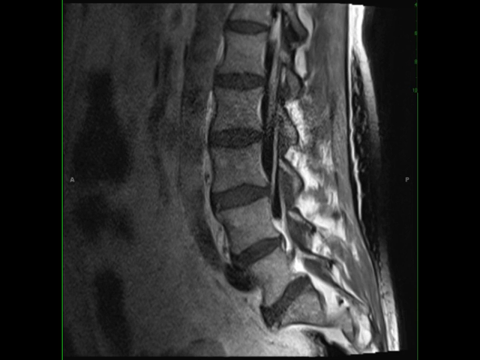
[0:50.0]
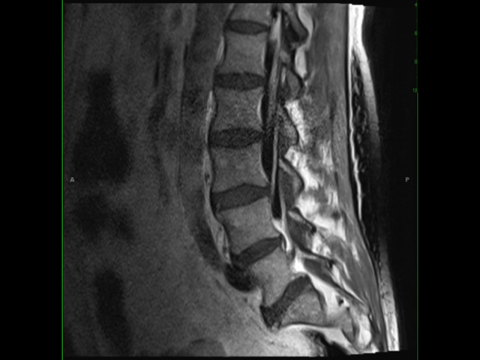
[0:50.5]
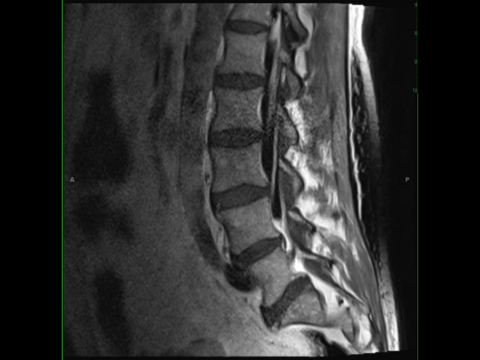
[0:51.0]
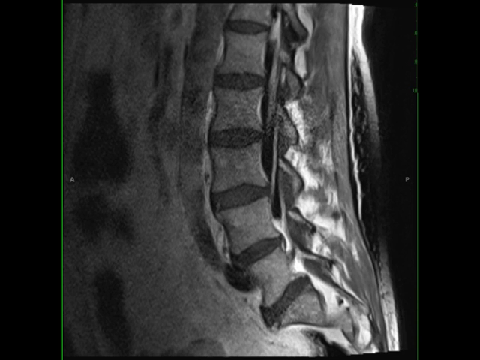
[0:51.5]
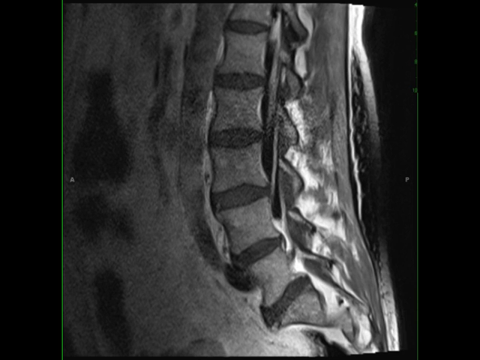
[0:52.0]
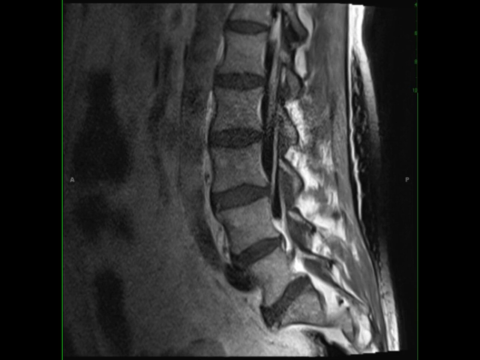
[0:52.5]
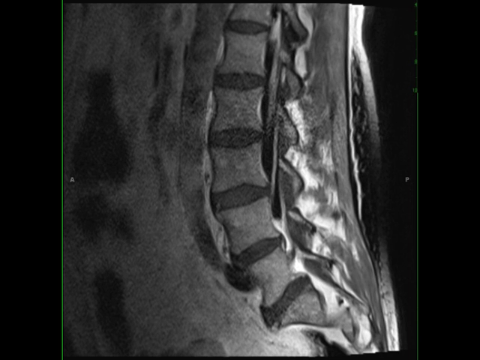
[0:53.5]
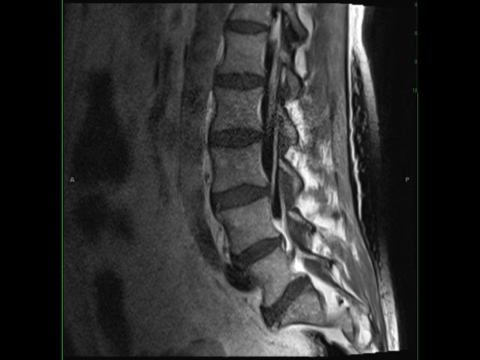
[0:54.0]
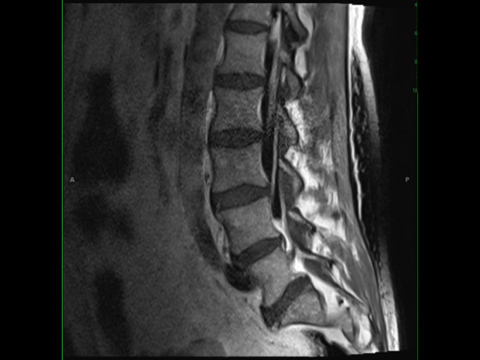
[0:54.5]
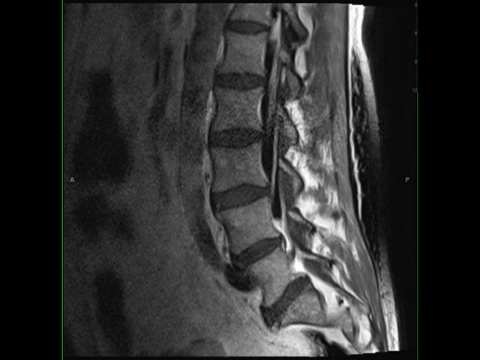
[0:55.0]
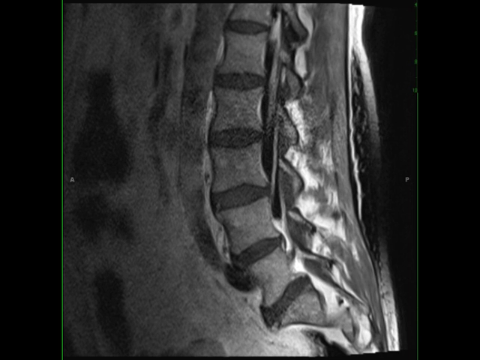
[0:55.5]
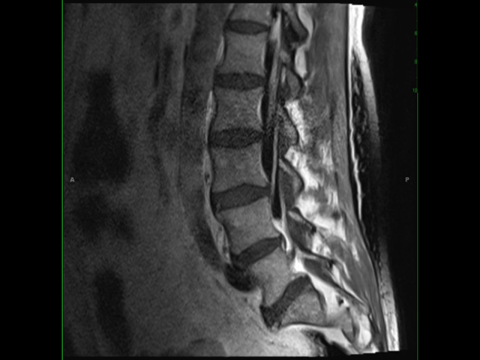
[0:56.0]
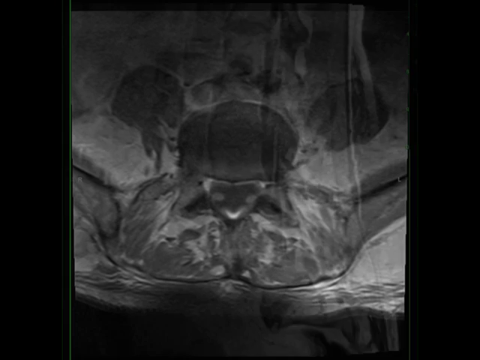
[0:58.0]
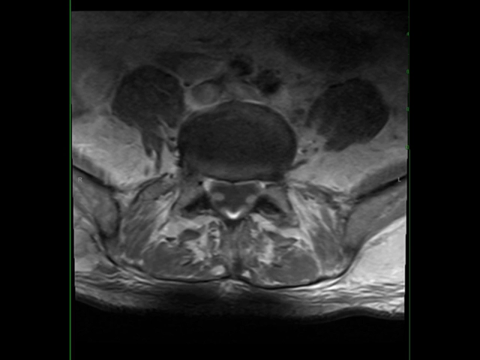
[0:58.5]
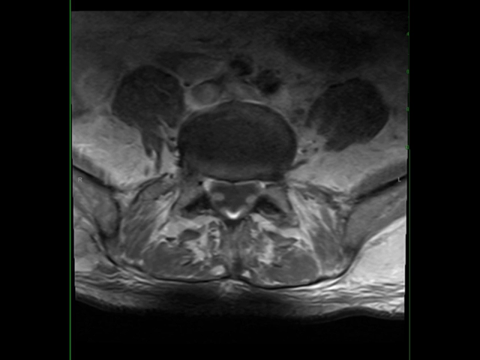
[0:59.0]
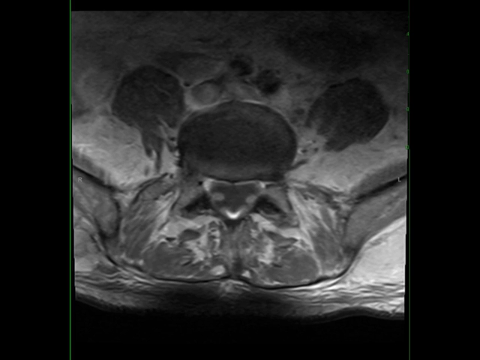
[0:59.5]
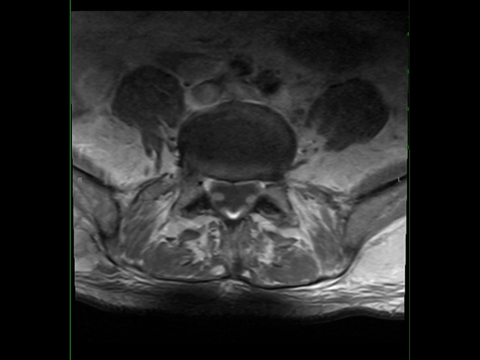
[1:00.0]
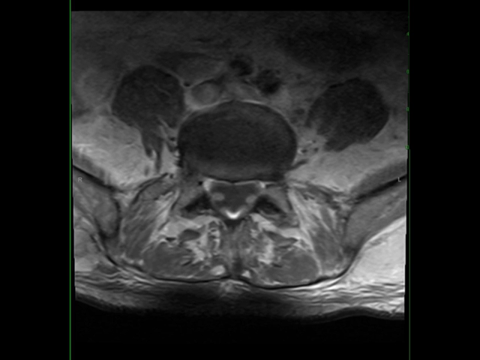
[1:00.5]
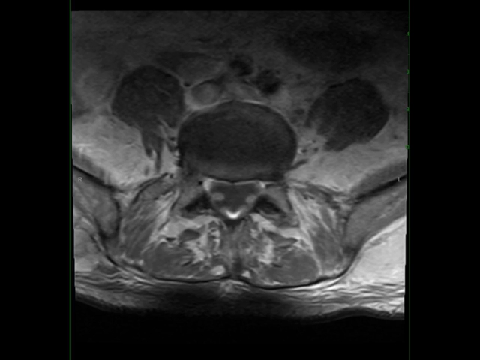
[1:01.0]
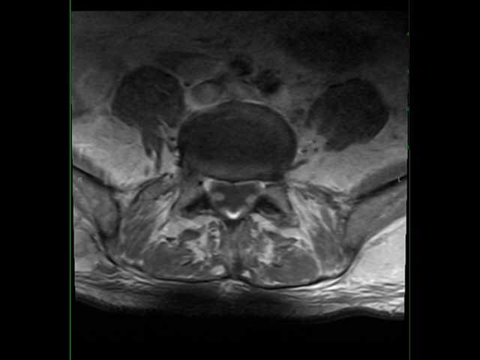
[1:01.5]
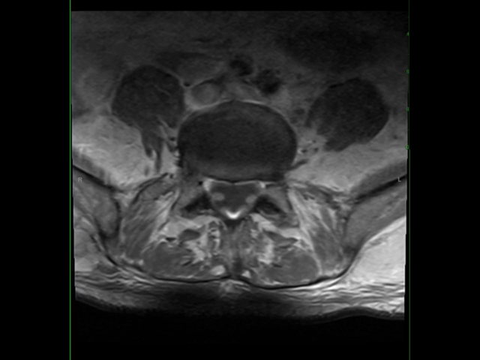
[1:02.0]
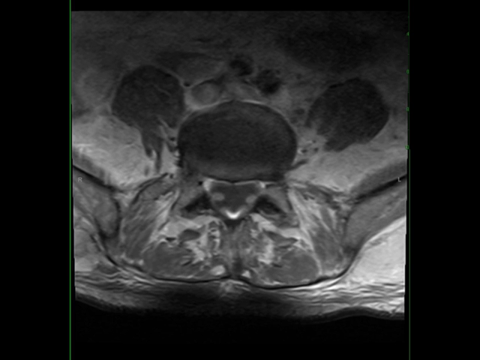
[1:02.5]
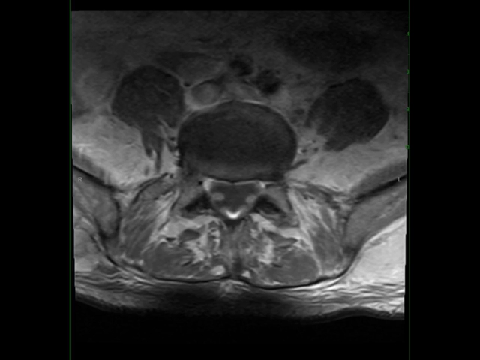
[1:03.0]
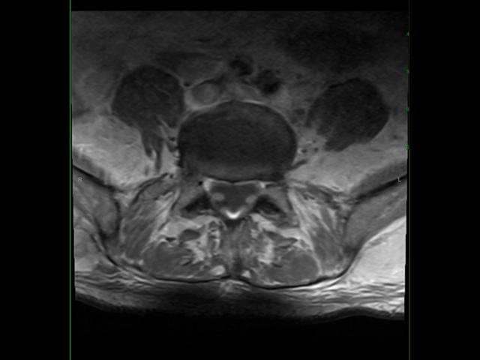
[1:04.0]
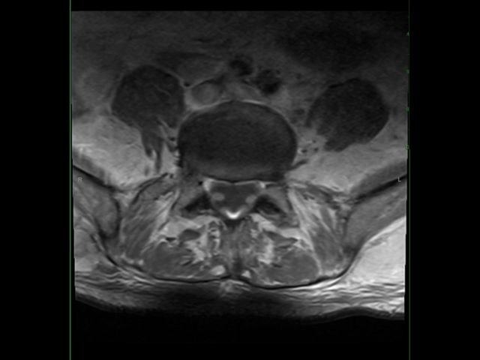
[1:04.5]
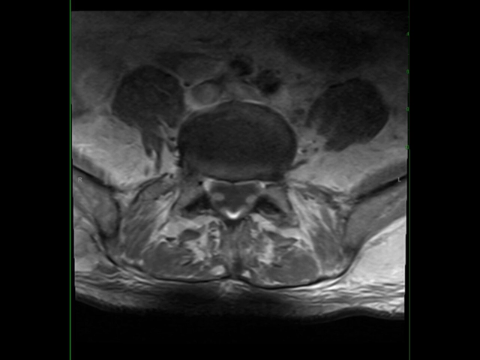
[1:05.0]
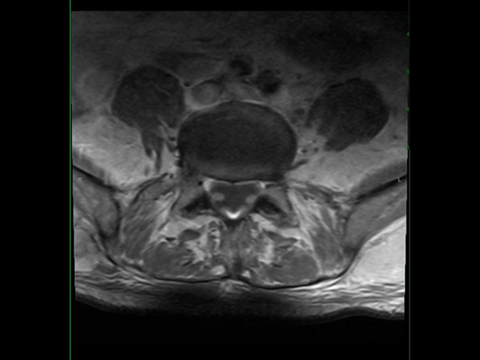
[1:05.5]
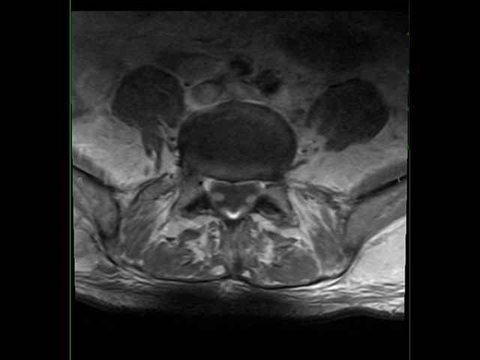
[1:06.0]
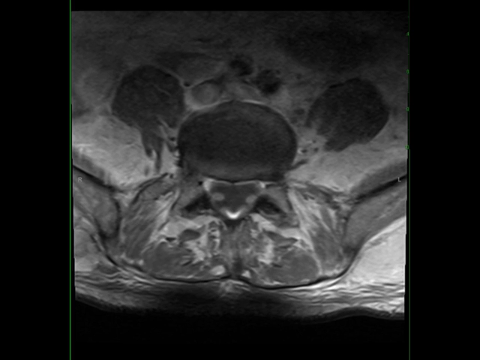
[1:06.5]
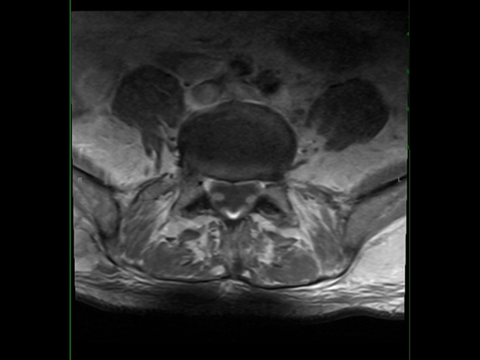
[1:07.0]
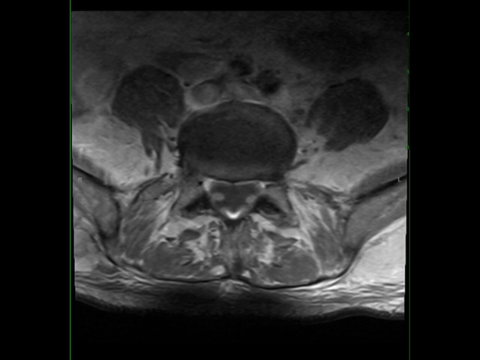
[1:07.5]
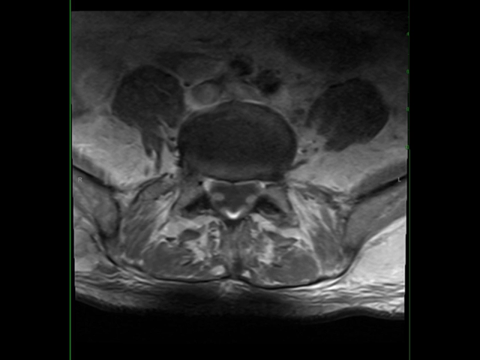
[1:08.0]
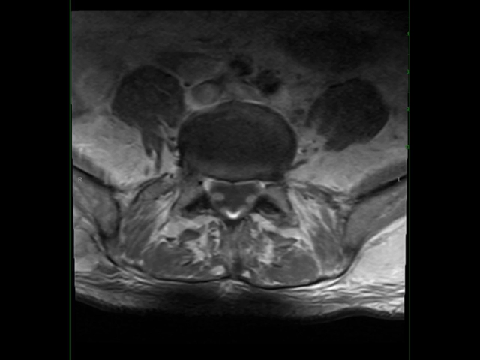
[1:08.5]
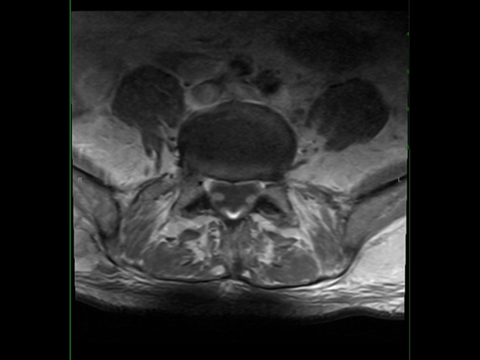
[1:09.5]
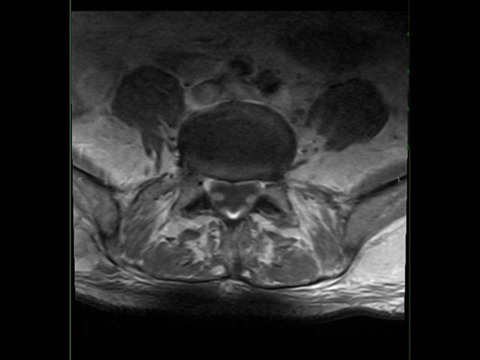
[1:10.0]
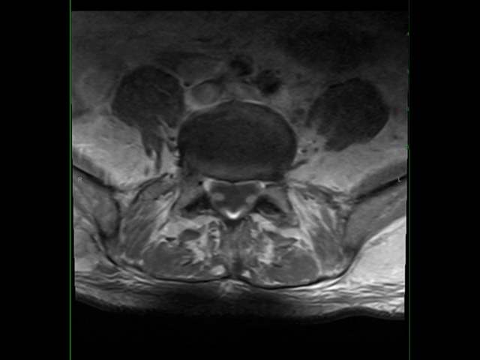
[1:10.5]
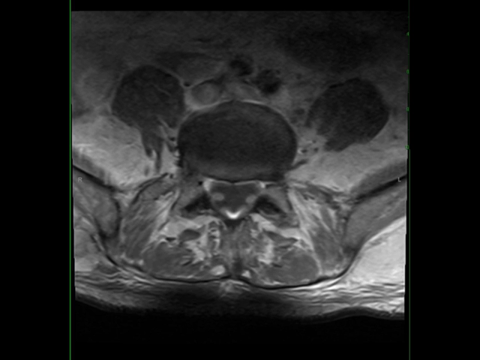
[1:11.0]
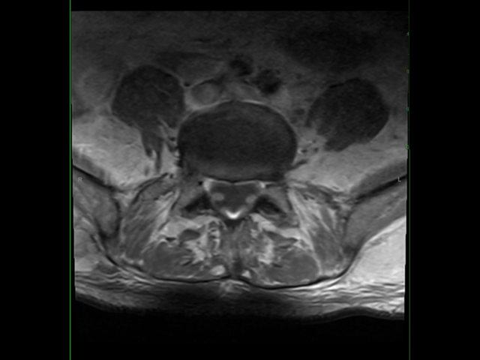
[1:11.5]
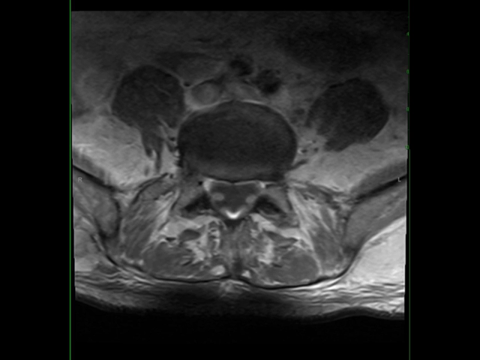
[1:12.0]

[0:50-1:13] A grayscale, side-on view of the internals of some sort of animal is shown; it looks to be a spine. After a few moments, the image changes to a new image of other internal parts of an animal. The bottom of the screen is black, while toward the top there are all sorts of shapes in grayscale, looking very much like organs of some kind, or perhaps a cross-section of some type of muscle or tissue. There is no motion at all.